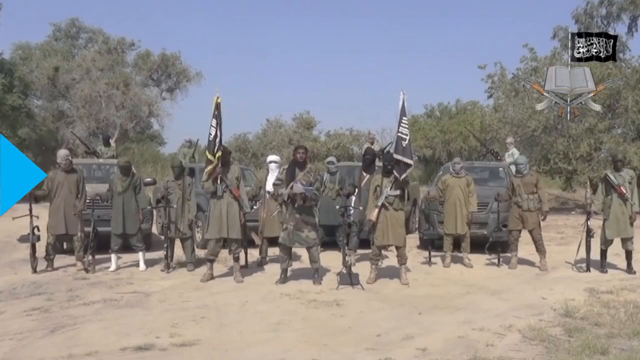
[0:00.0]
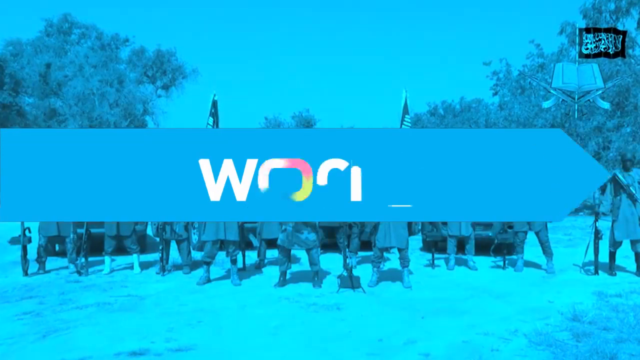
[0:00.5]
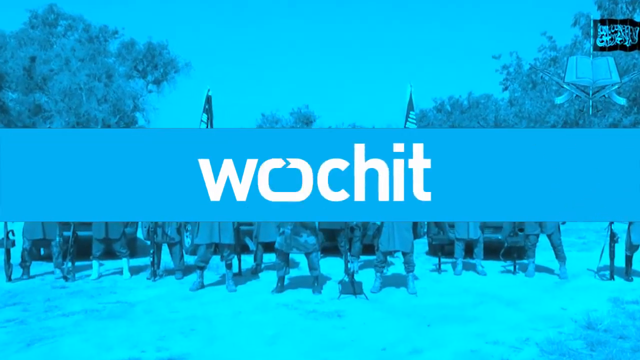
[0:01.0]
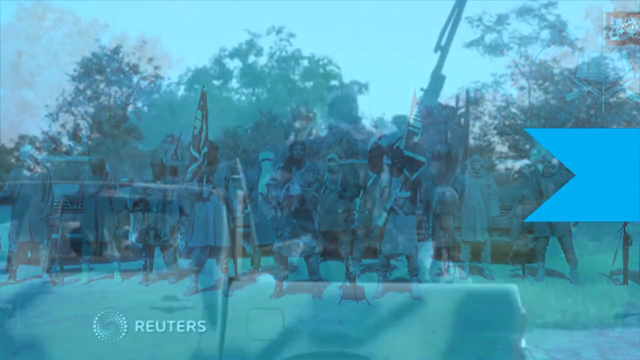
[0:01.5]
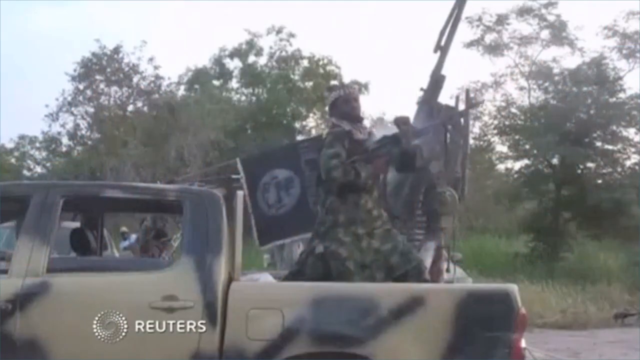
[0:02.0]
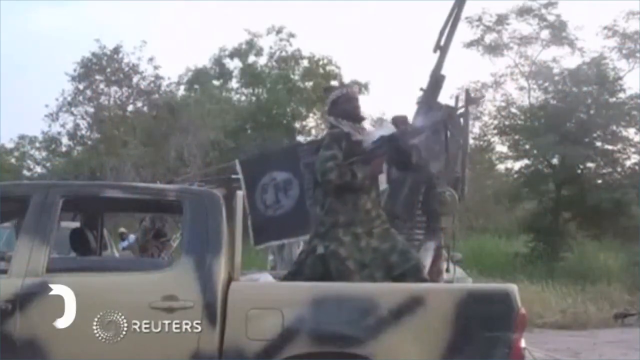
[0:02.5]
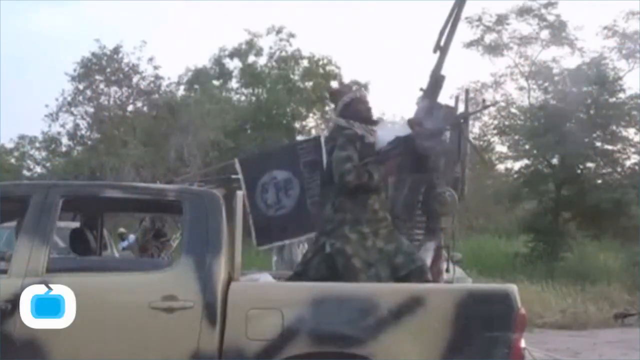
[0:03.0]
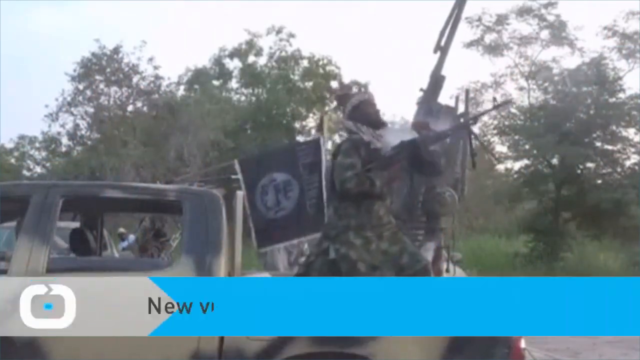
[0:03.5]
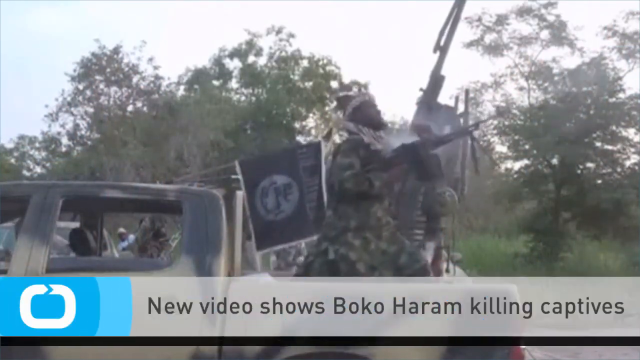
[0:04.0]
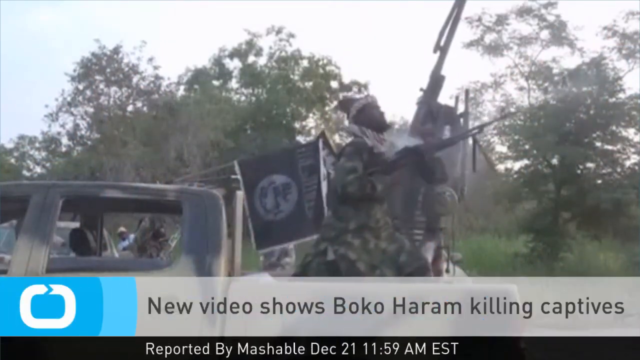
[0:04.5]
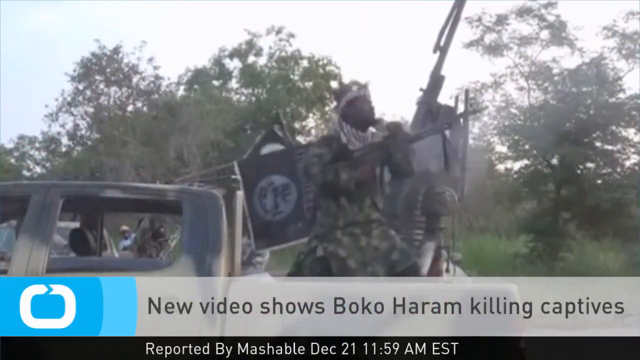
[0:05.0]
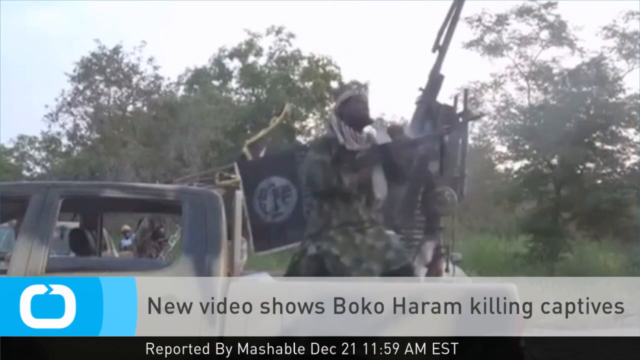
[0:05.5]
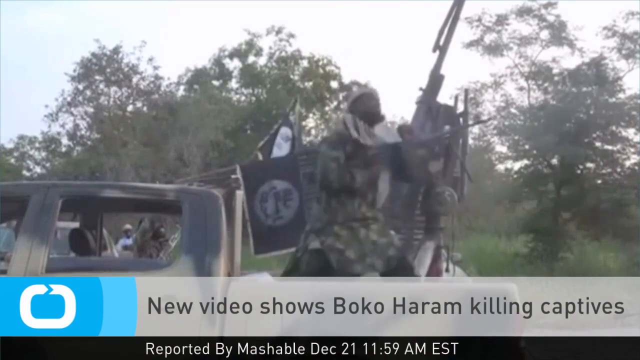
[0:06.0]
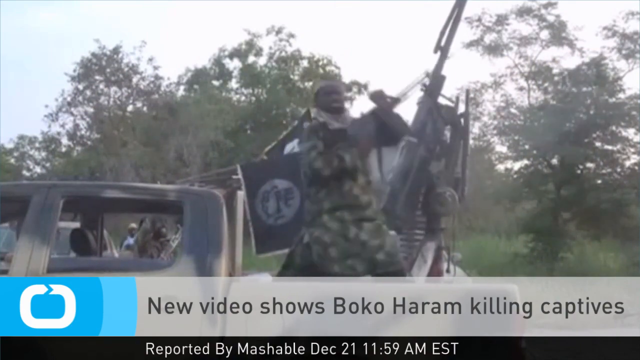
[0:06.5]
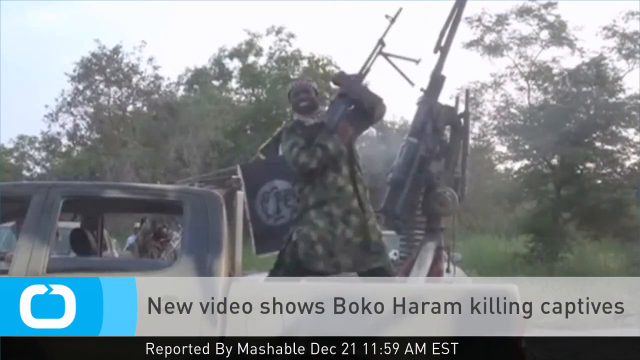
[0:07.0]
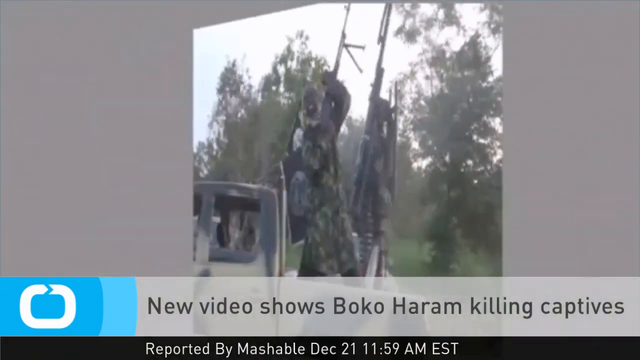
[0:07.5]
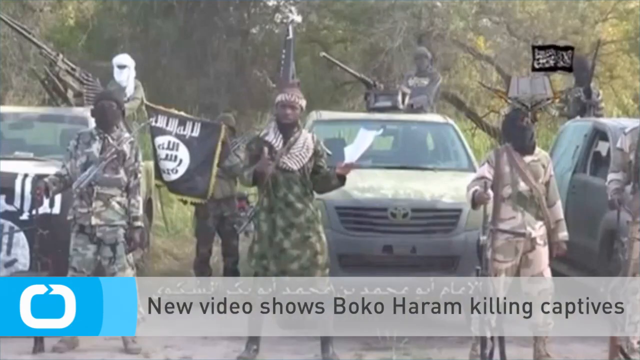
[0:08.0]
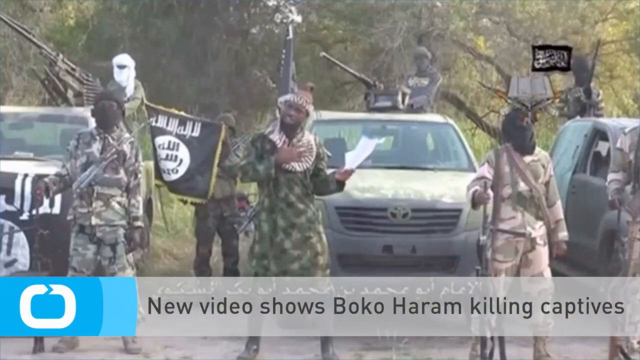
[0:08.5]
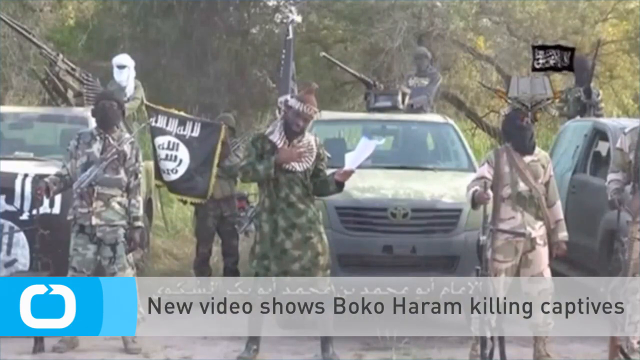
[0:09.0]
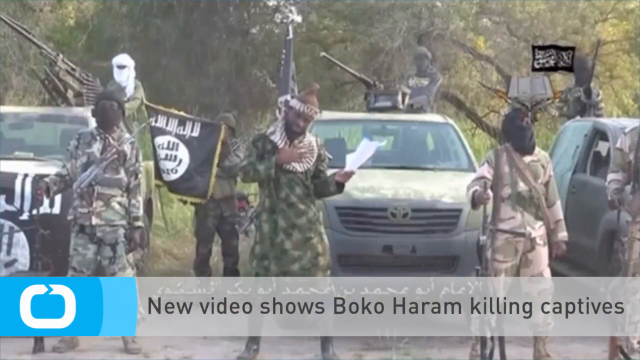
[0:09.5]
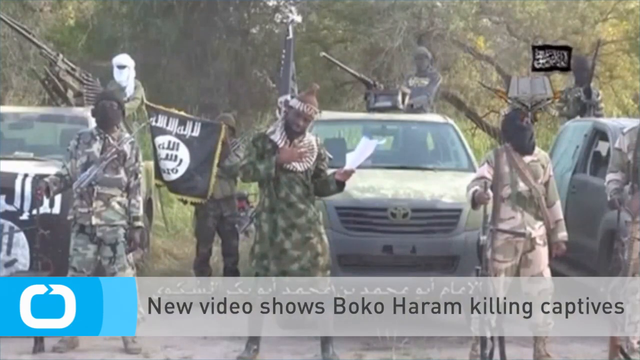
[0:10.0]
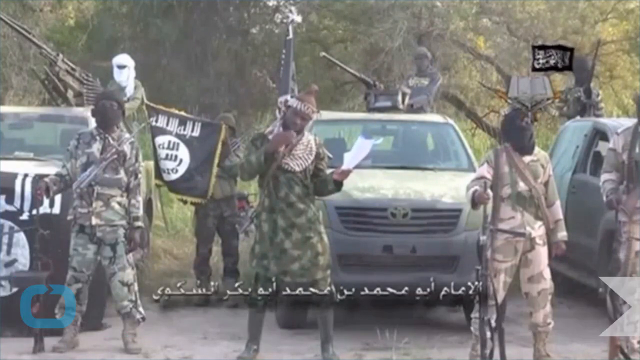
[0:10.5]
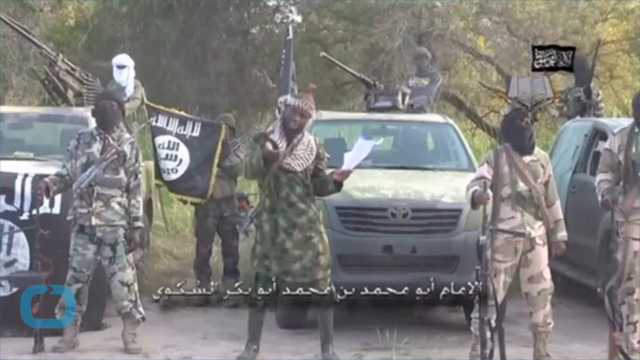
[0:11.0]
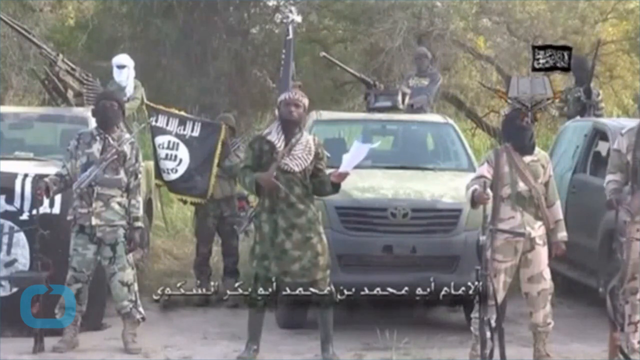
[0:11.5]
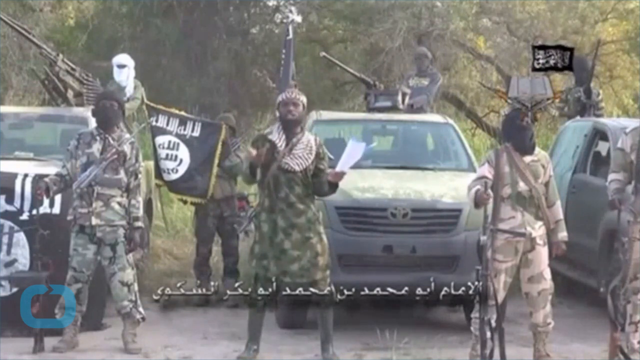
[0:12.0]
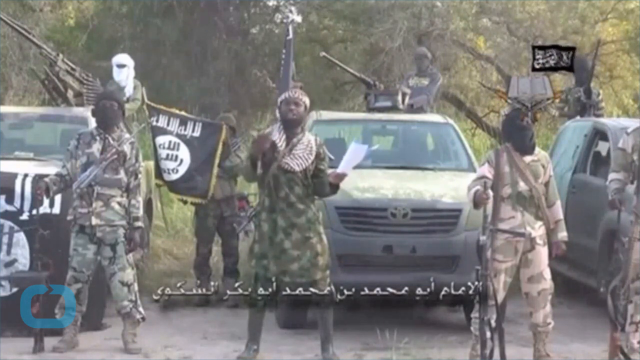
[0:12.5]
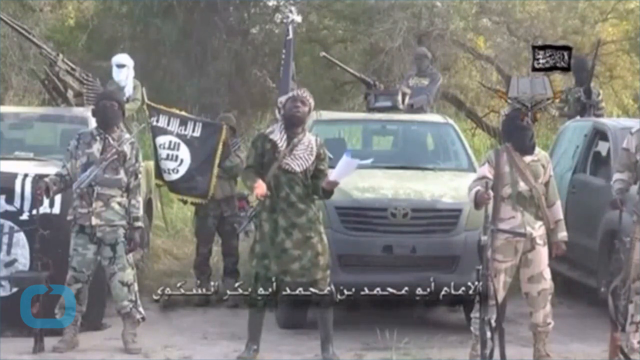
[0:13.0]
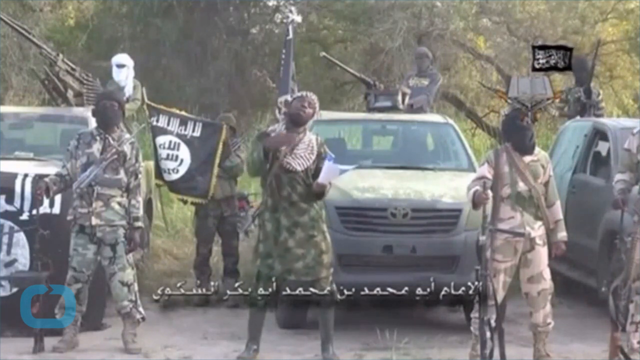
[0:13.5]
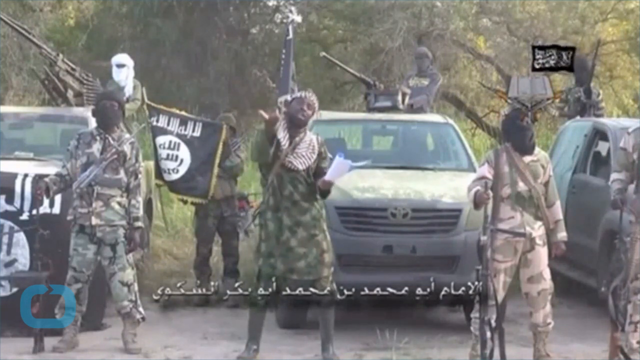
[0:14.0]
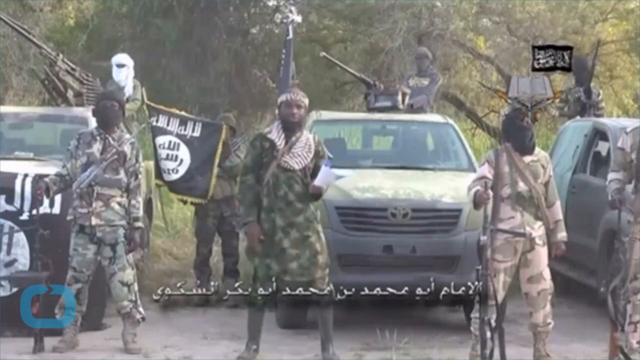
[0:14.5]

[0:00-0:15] The video opens with an image carrying the name "WOCHIT" and the headline "New video shows Boko Haram killing captives." Men dressed in military camouflage hold primitive weapons, including a machine gun. One man wears green camouflage and another wears grayish camouflage. A Toyota vehicle is in the background, possibly with a weapon mounted in its bed or on its roof. The man in green camouflage is reading from a piece of paper, sort of delivering an edict, apparently a list of demands, possibly in a hostage situation. Two soldiers on the left, on either side of the man in green, have their faces covered in black so they cannot be identified.